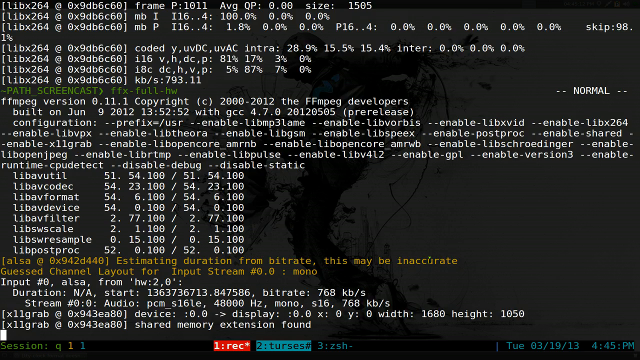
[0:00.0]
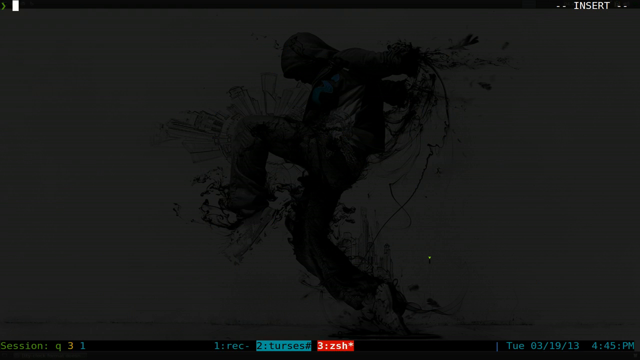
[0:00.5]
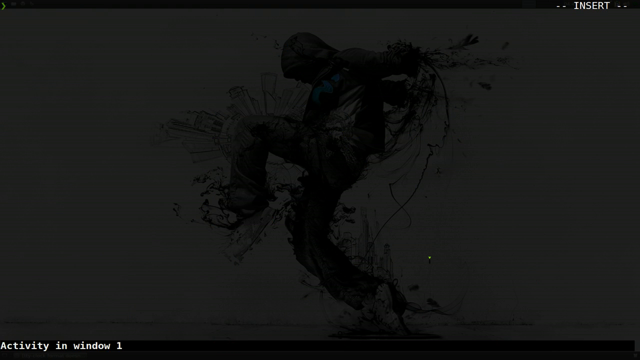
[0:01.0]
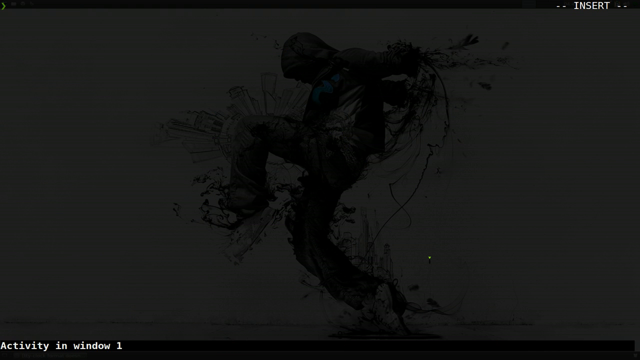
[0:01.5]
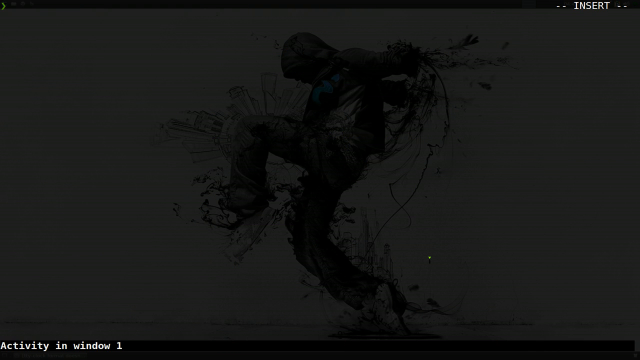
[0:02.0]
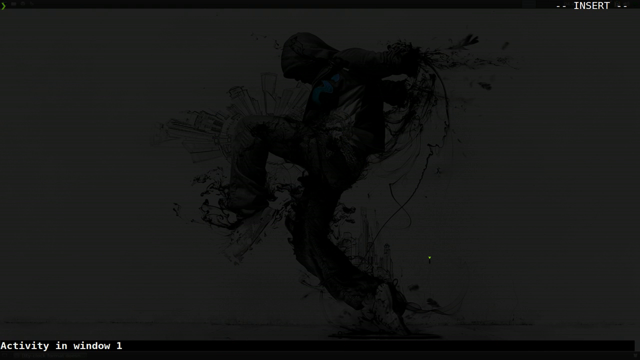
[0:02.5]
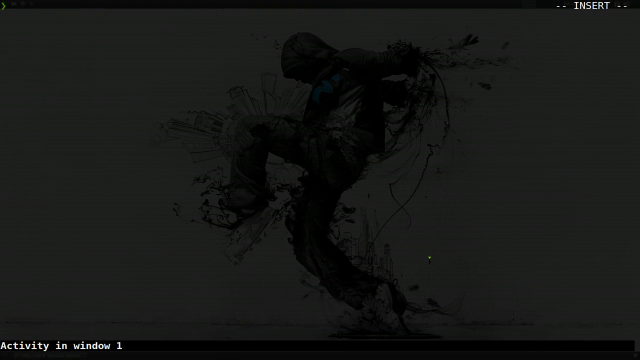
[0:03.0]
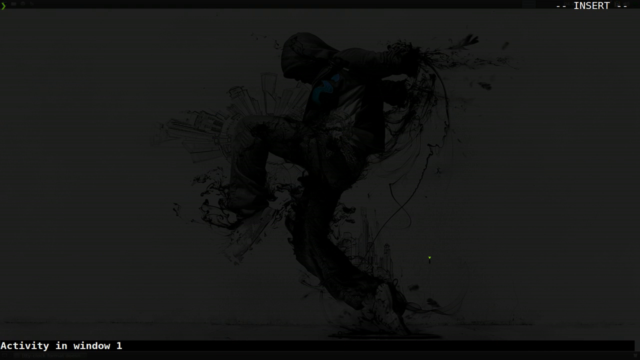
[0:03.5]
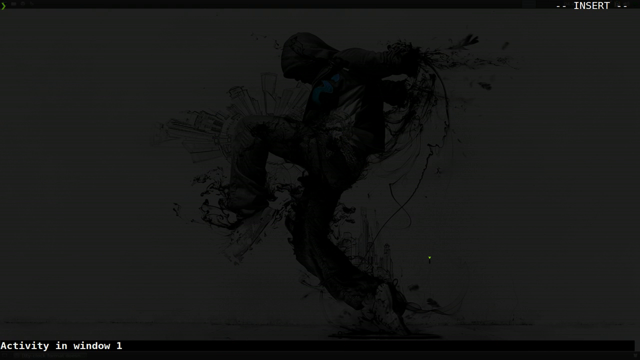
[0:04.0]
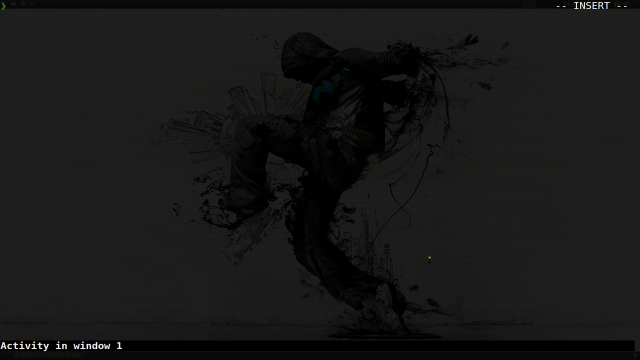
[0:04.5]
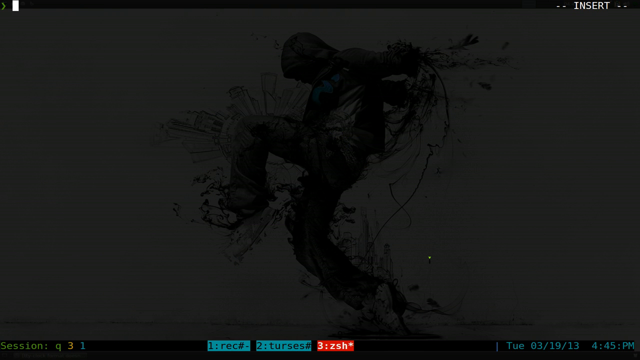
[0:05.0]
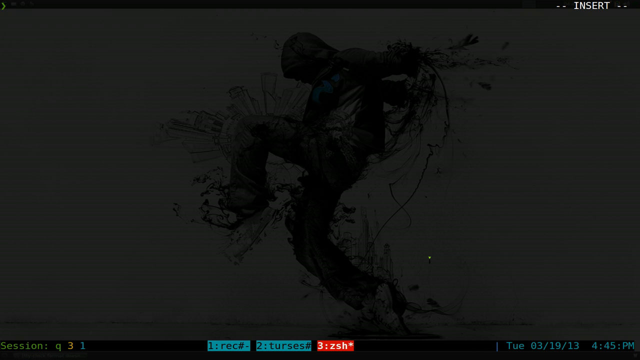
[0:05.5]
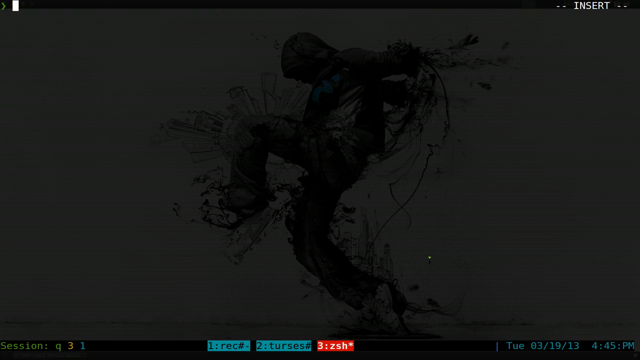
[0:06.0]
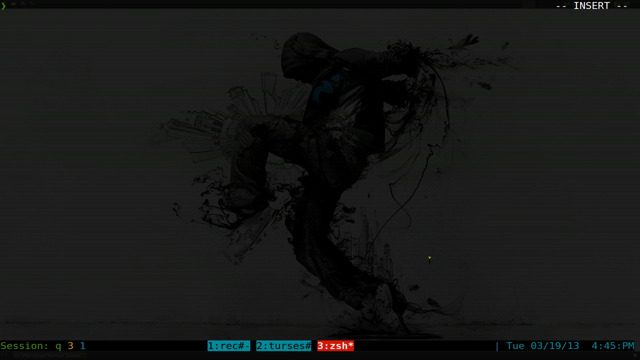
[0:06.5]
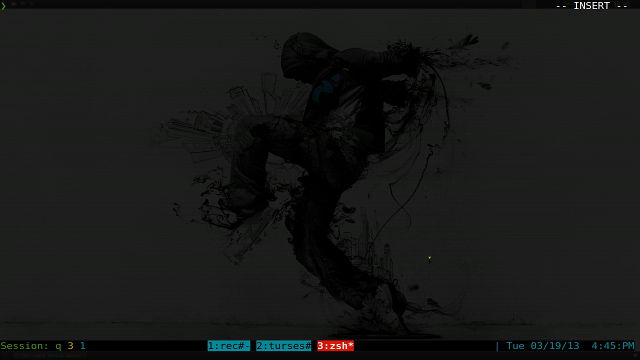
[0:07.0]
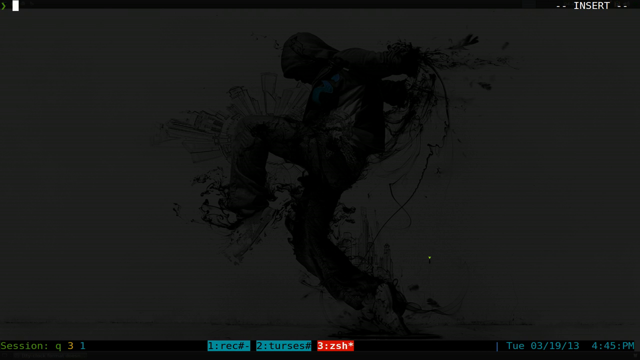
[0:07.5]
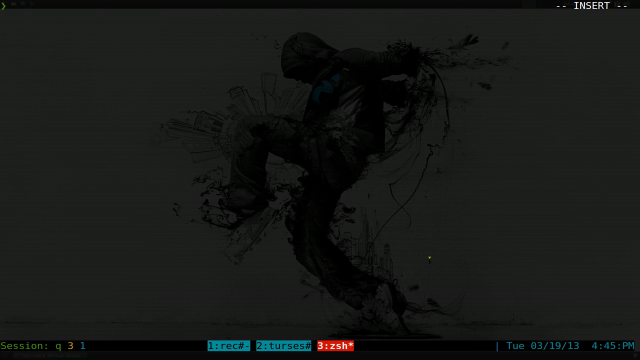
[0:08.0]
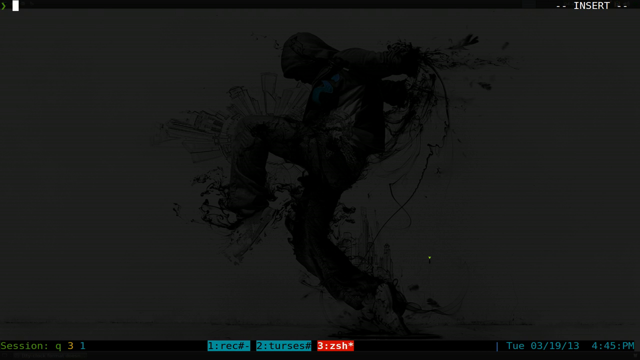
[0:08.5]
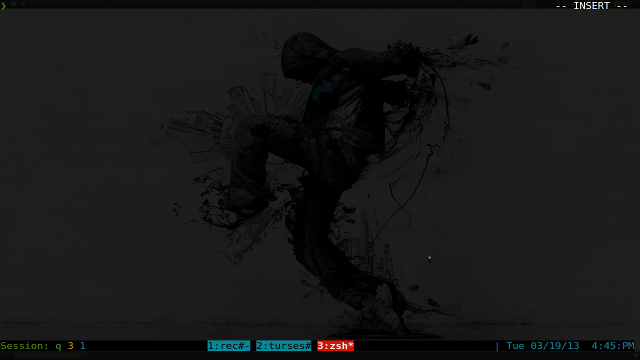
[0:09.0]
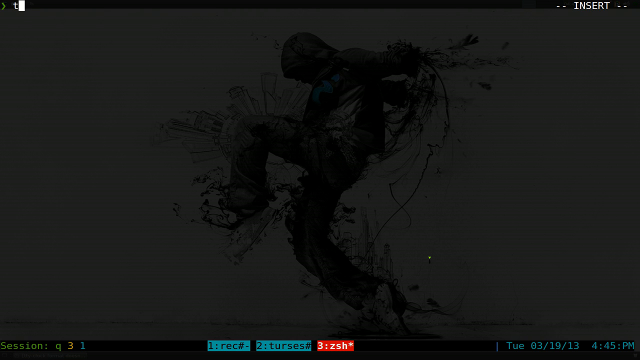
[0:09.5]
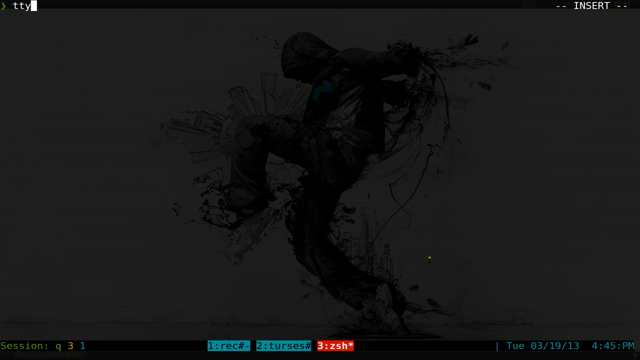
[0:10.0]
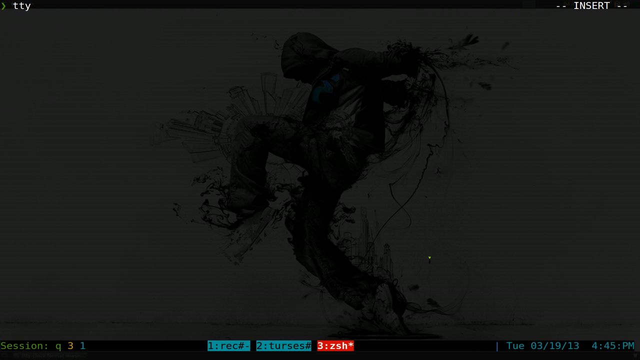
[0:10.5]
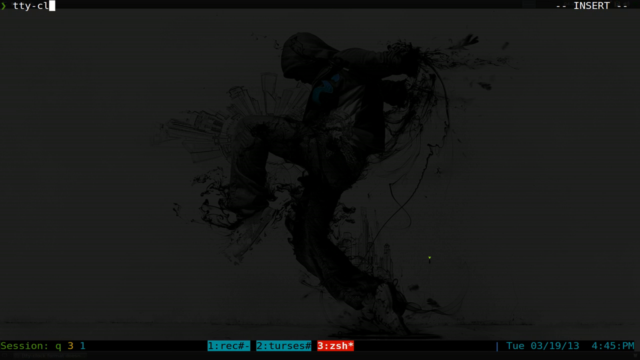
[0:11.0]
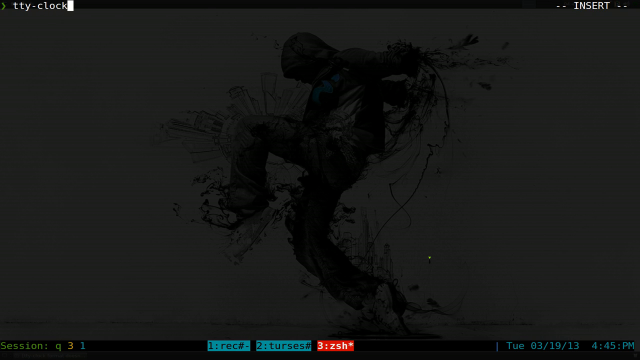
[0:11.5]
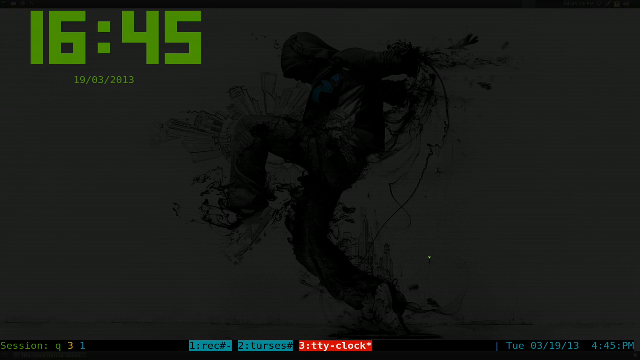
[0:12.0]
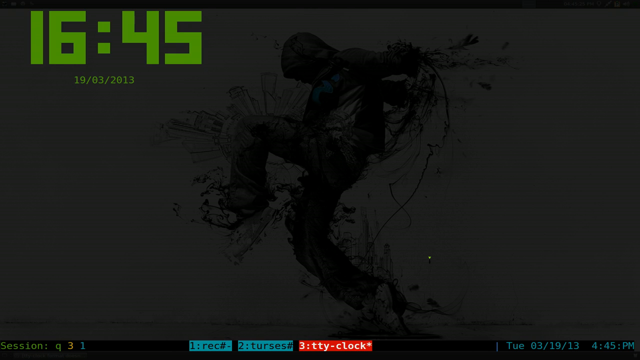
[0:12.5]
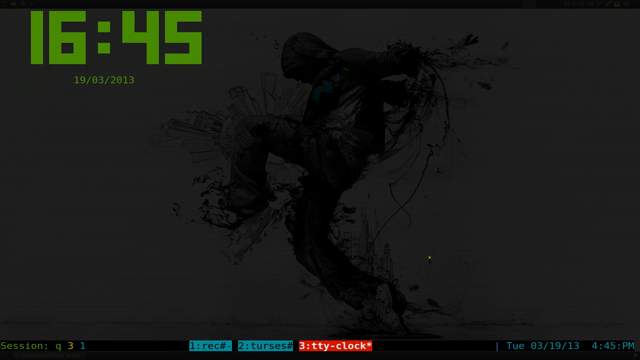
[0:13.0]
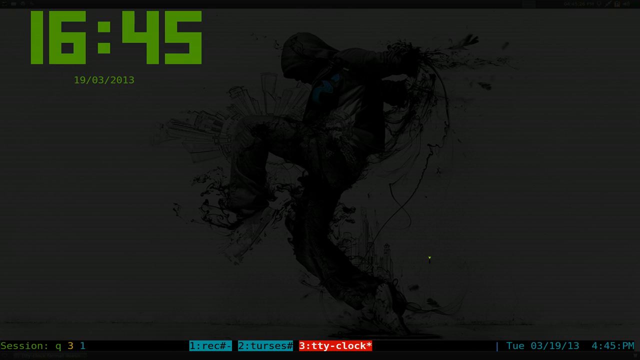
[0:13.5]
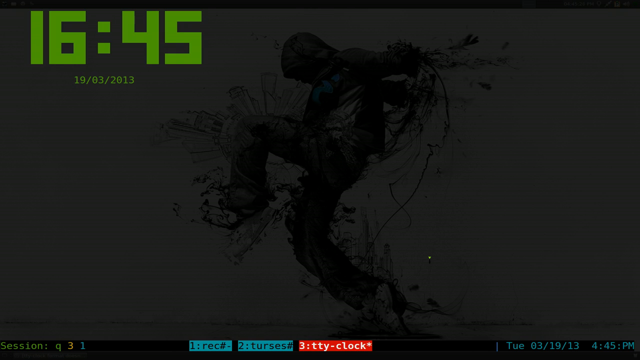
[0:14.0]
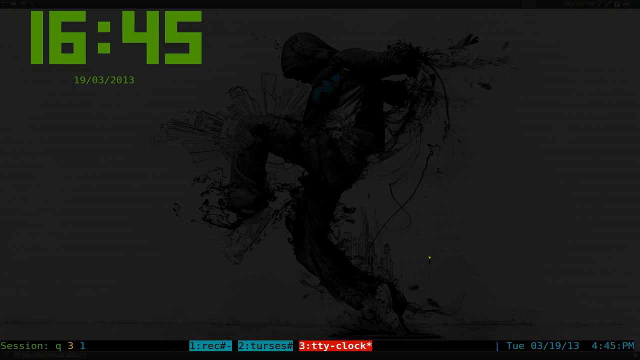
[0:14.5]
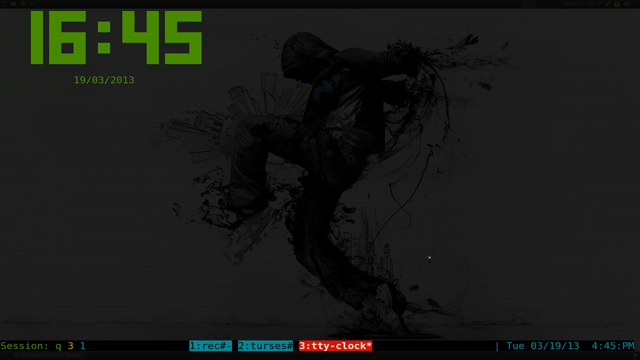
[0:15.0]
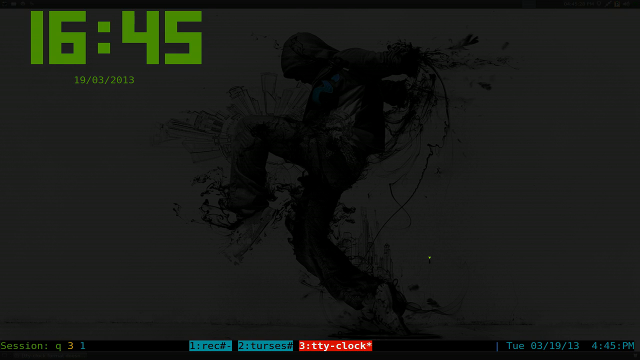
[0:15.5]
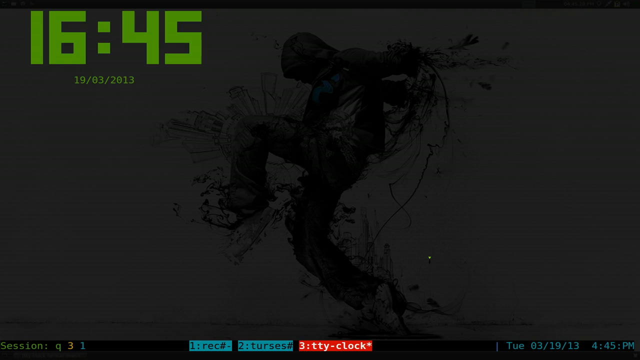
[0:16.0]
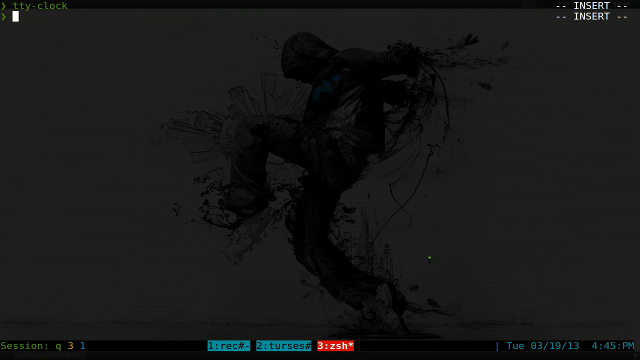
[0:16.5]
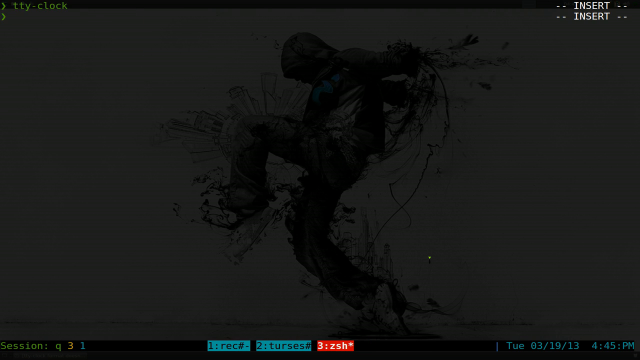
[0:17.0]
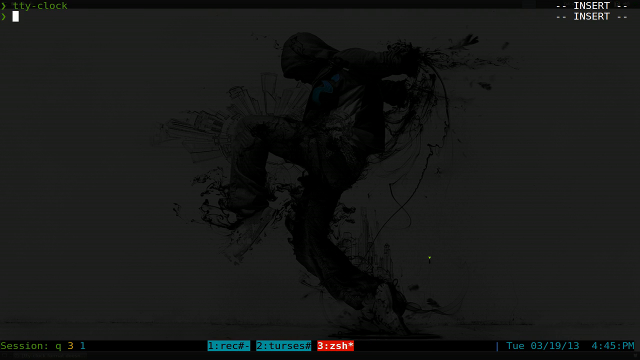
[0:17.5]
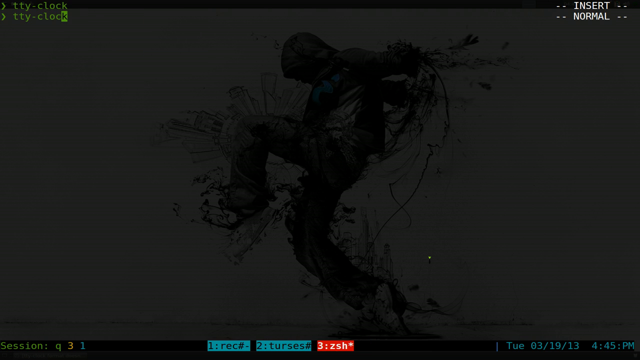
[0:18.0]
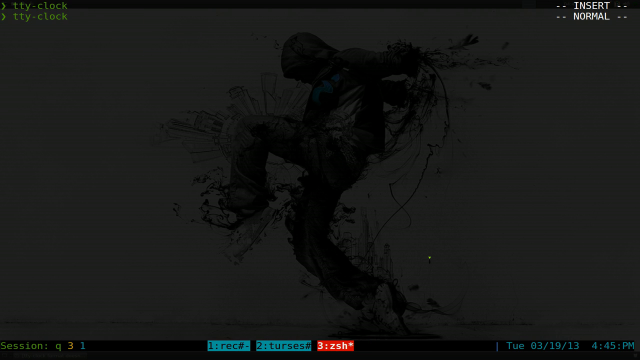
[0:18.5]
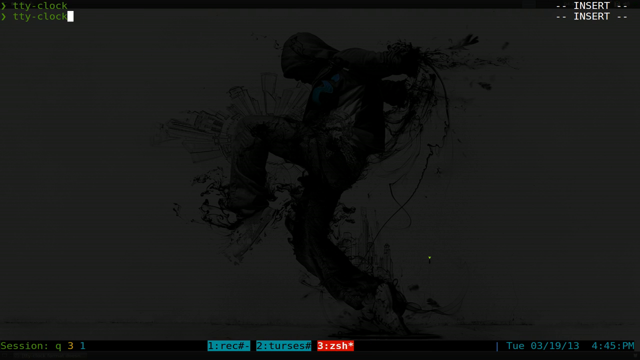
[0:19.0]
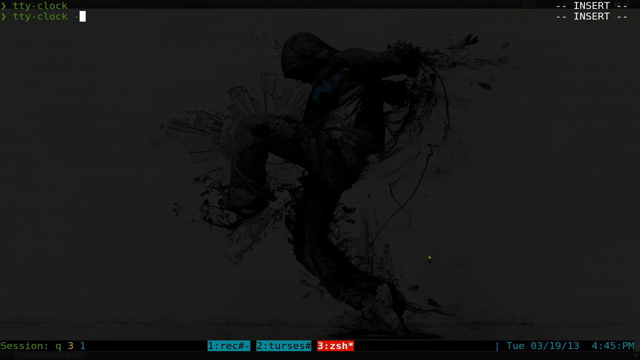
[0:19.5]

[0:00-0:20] A computer screen looks like the command screen of a computer operating system. It has a black background with a lot of text written across it; the text looks like parameters of locations on the machine. The screen goes blank, and the cursor begins to blink in the upper left corner. Text then appears as if the user is typing at the cursor: "tty.clock". The time appears in the upper left corner in large font, reading "16.45", with the date "19.03.2013" below it, all written in green. This stays on screen for a while, then the time and date disappear and the command prompt returns. "tty.clock" is typed on the command prompt again, followed by three dots.